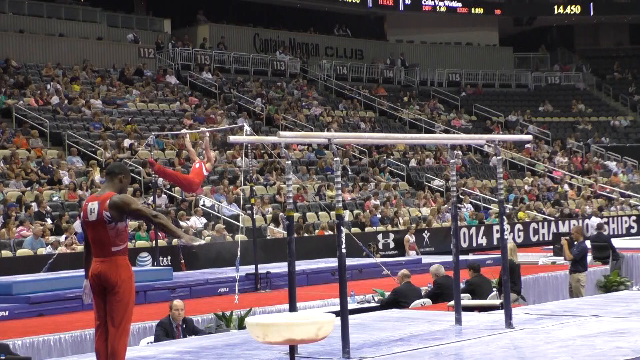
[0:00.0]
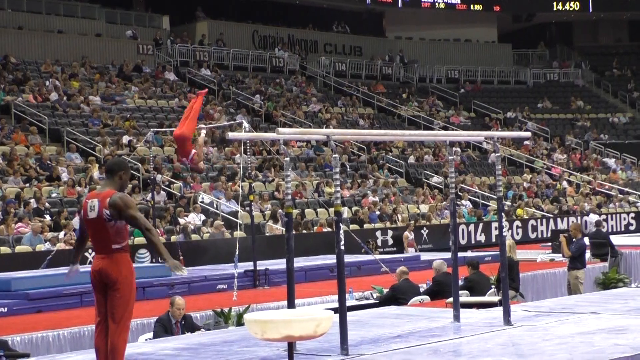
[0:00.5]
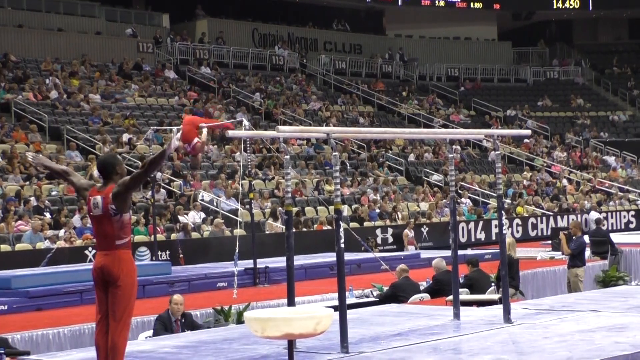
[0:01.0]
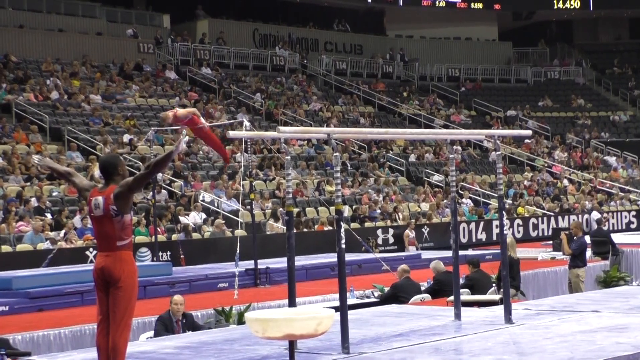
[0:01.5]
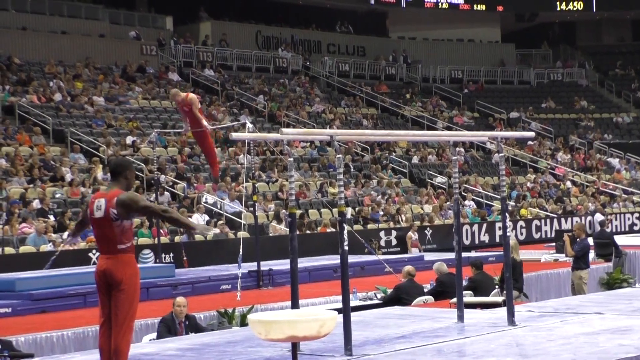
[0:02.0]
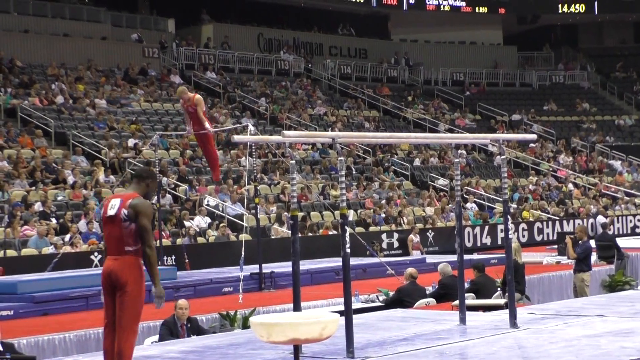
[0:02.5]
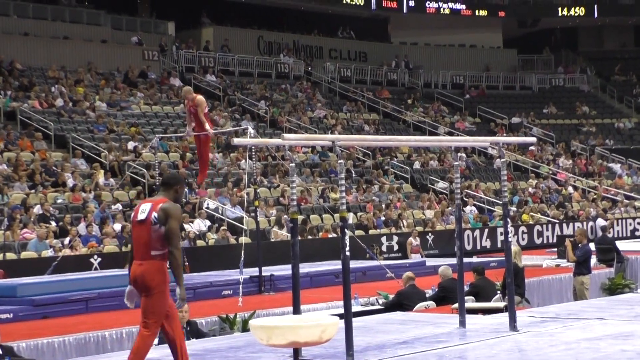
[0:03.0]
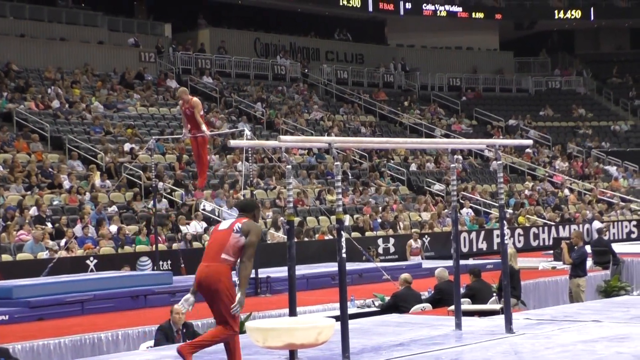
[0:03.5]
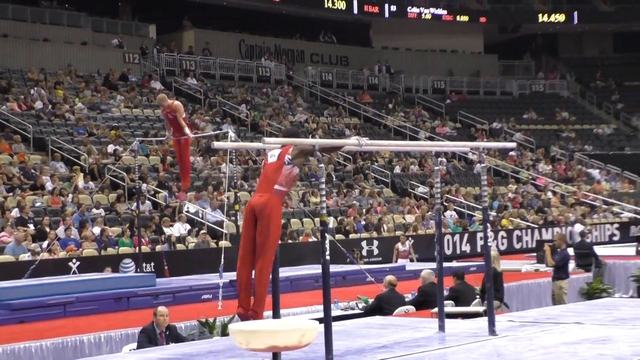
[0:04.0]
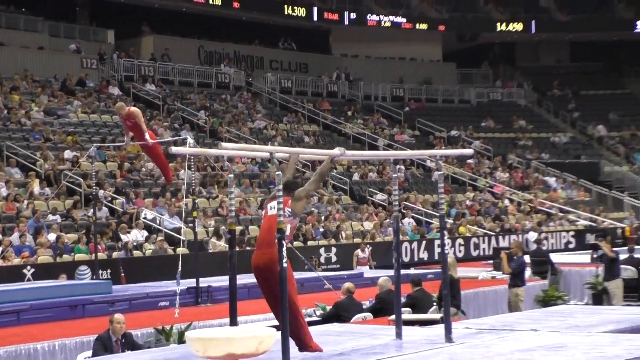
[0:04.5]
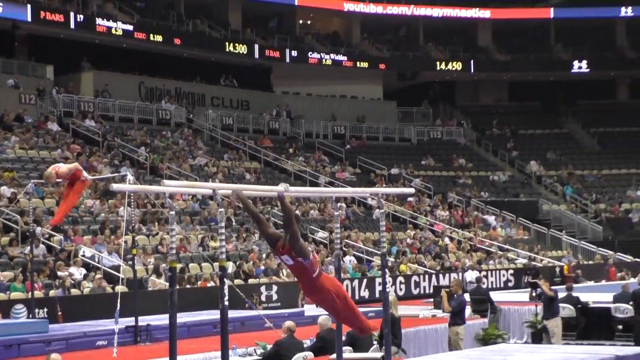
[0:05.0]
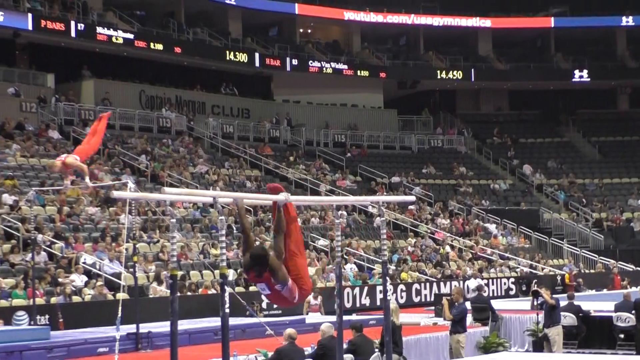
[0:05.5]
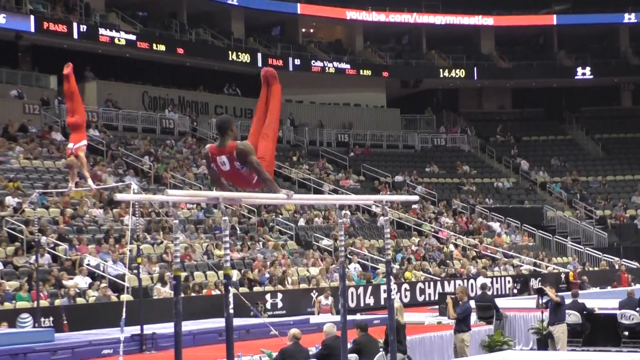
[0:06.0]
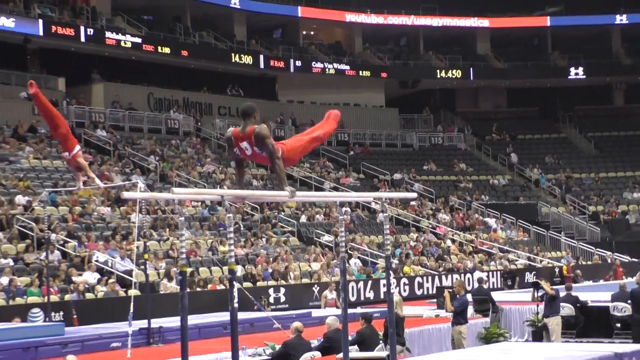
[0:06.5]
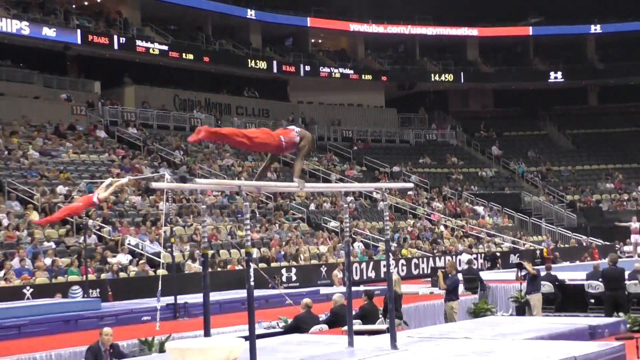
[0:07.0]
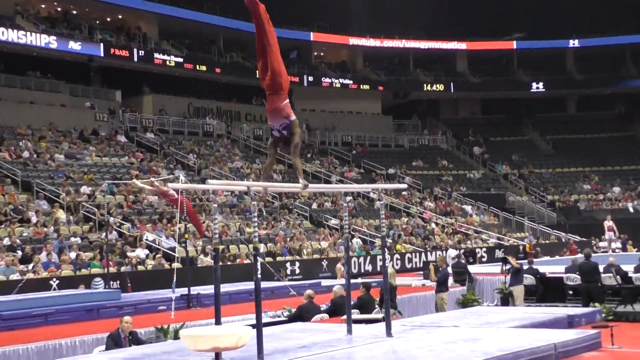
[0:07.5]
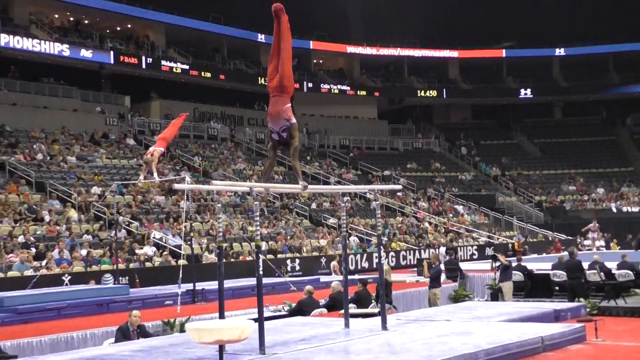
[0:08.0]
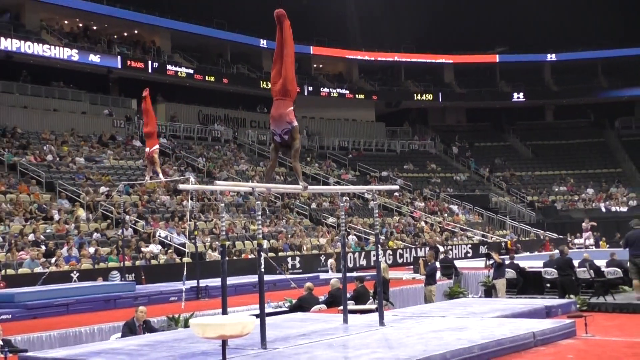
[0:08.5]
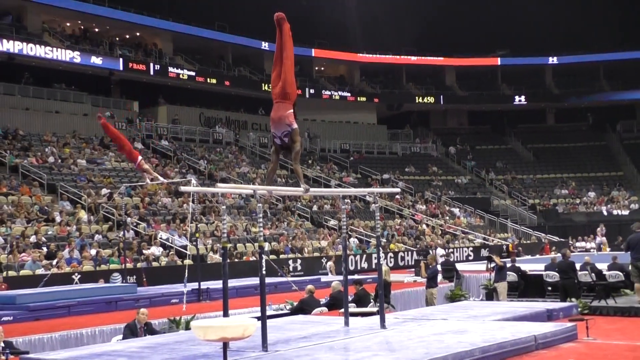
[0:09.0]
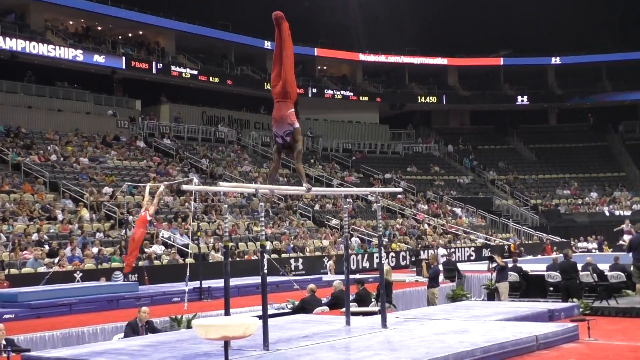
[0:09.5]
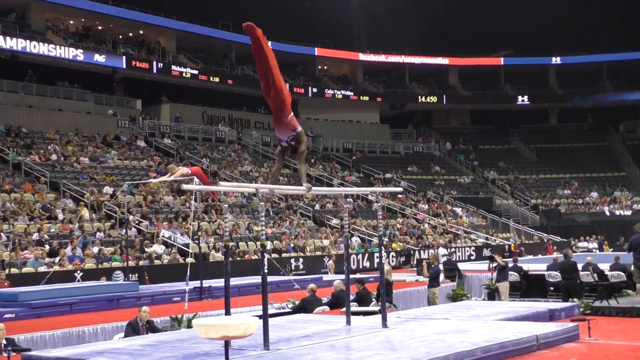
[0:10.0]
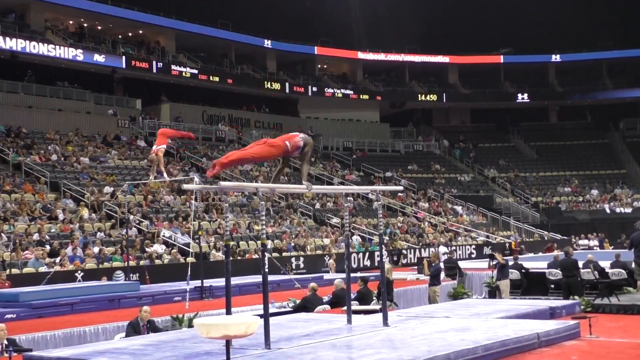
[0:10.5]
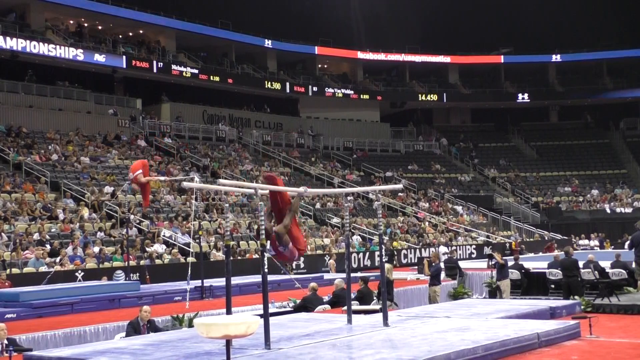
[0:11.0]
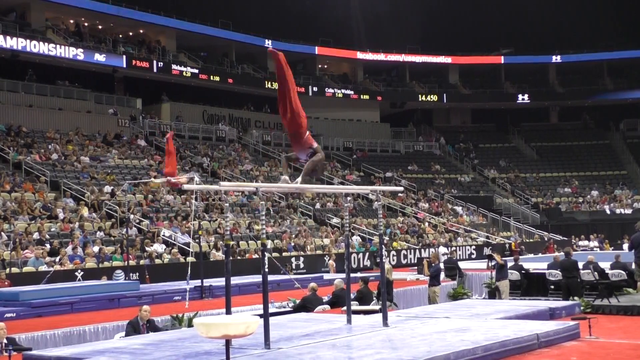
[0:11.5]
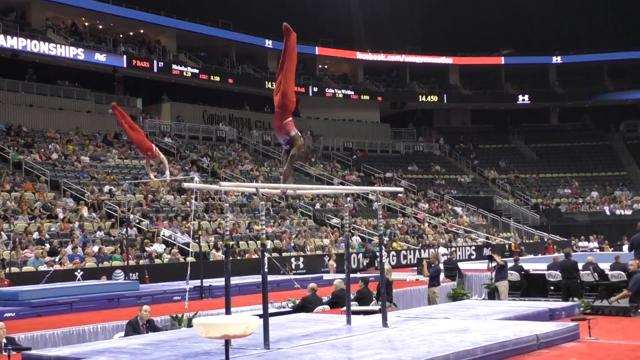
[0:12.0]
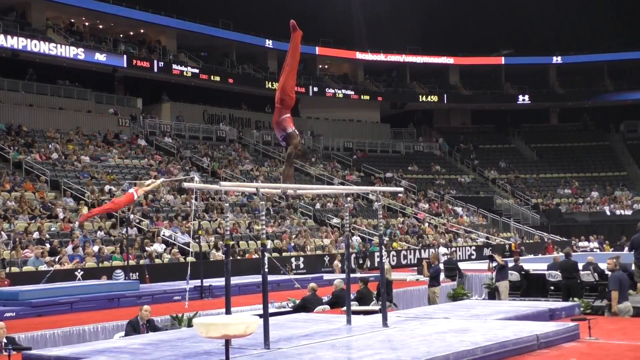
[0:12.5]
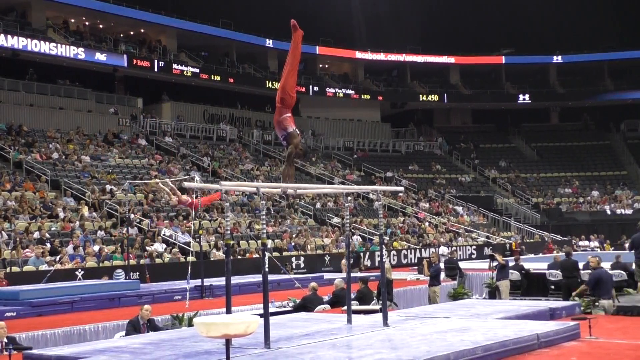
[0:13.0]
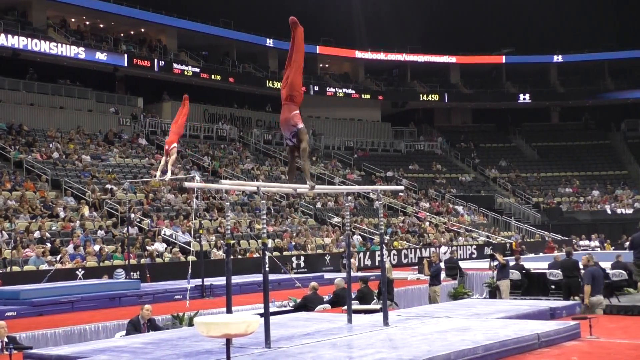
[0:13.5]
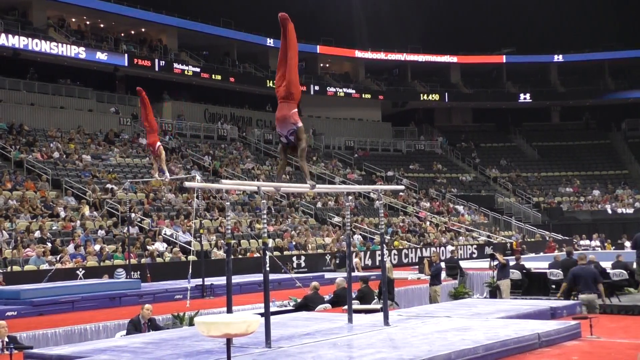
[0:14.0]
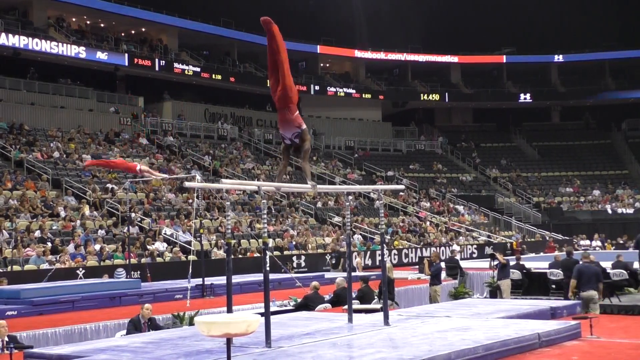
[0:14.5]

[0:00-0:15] U.S. male gymnast Marvin Kimble competes at what appears to be the 2014 national championships. Signage in the background reads "2014 PNG championships," which is believed to be the U.S. national championships for gymnastics. He appears to be competing on the parallel bars, and he mounts the bars and begins his routine. His outfit is red, white, and blue, suggesting he is apparently competing for the U.S. men's gymnastics team.